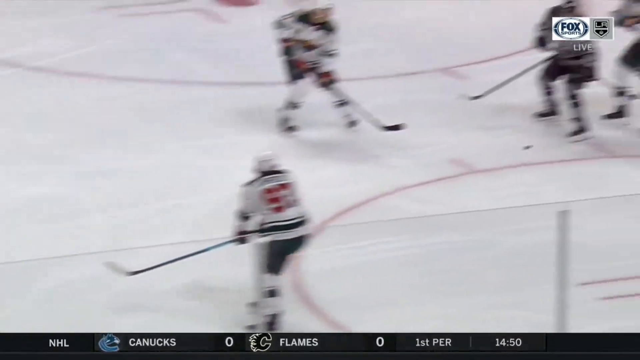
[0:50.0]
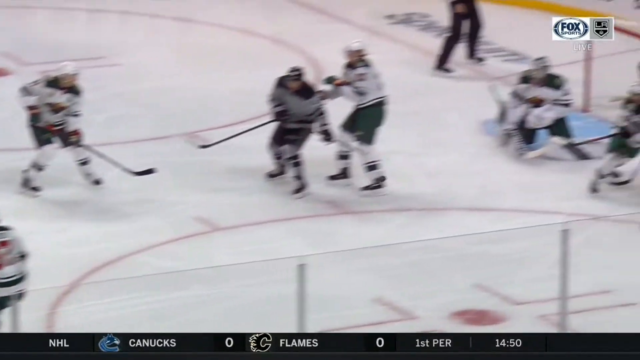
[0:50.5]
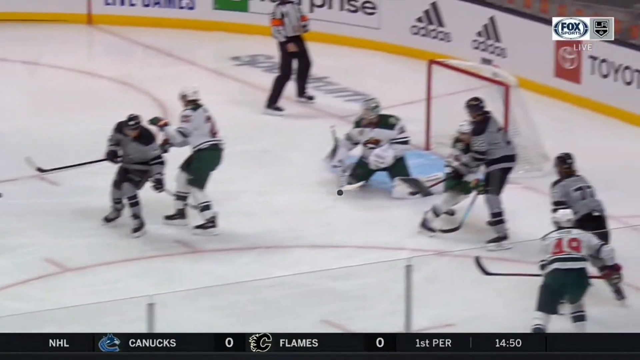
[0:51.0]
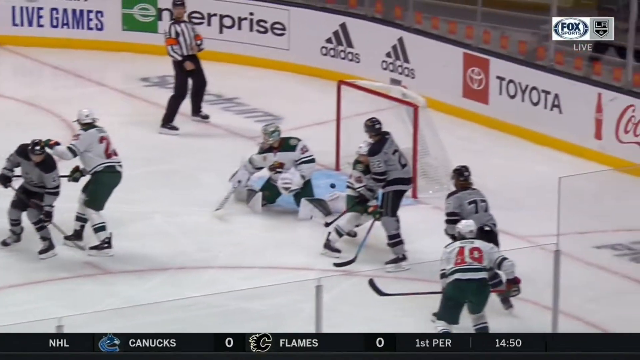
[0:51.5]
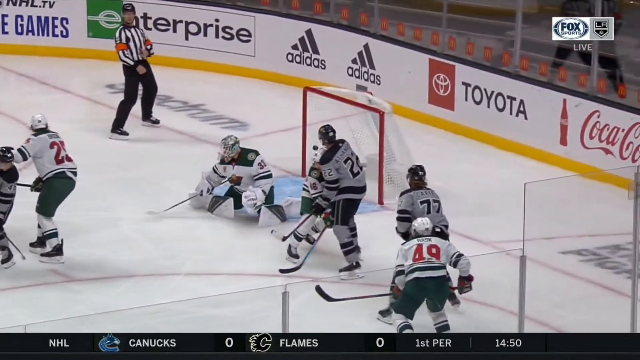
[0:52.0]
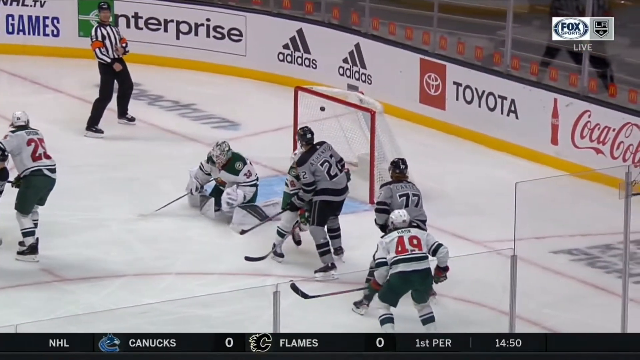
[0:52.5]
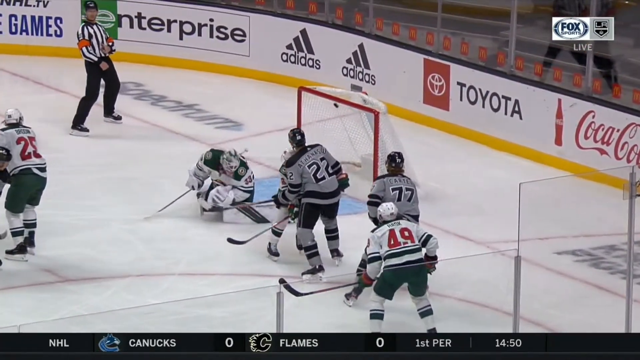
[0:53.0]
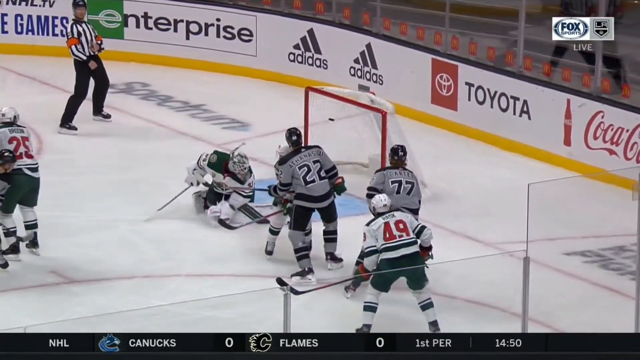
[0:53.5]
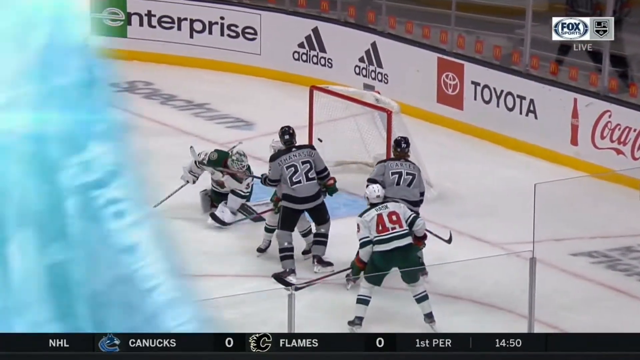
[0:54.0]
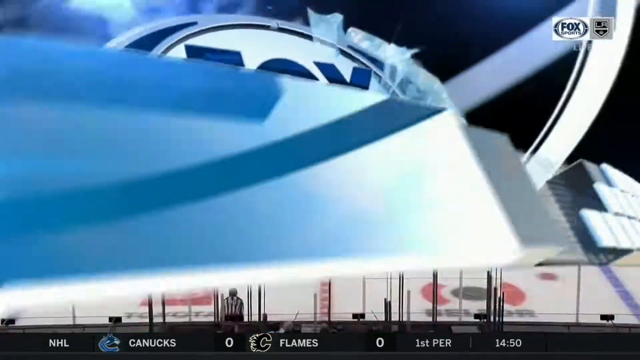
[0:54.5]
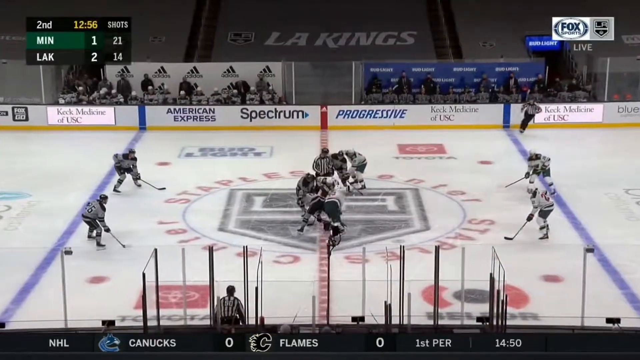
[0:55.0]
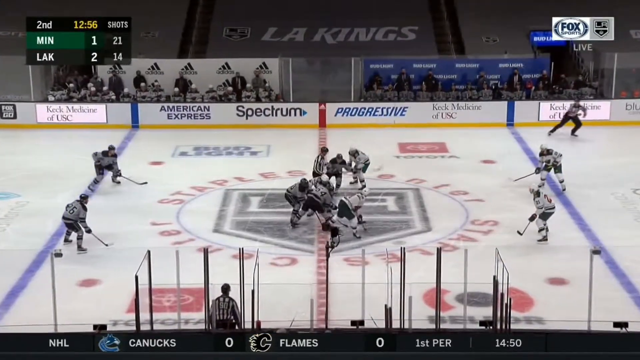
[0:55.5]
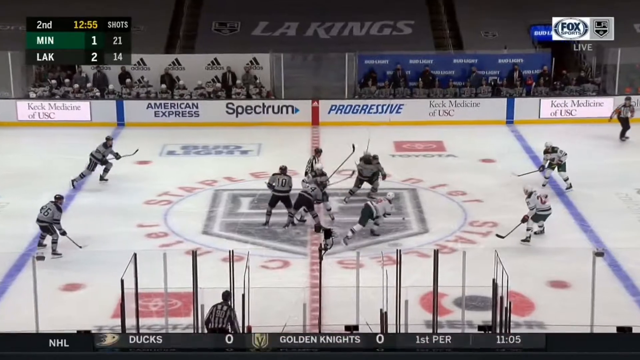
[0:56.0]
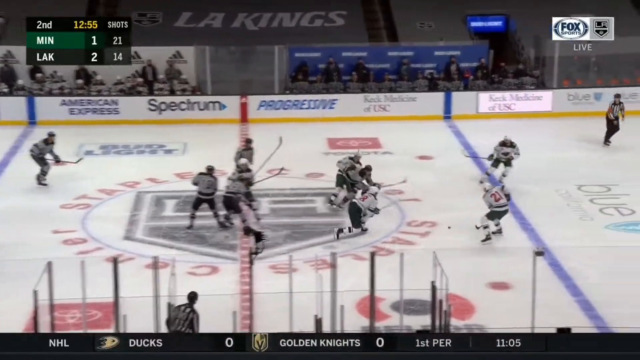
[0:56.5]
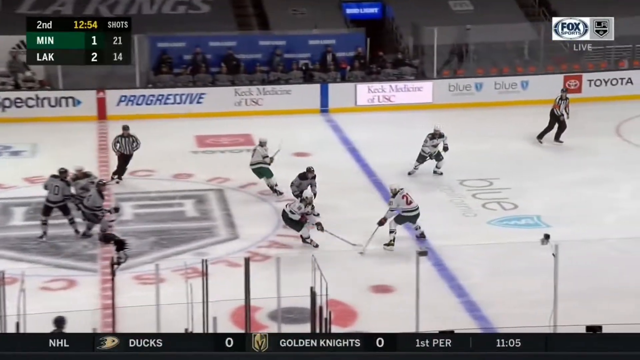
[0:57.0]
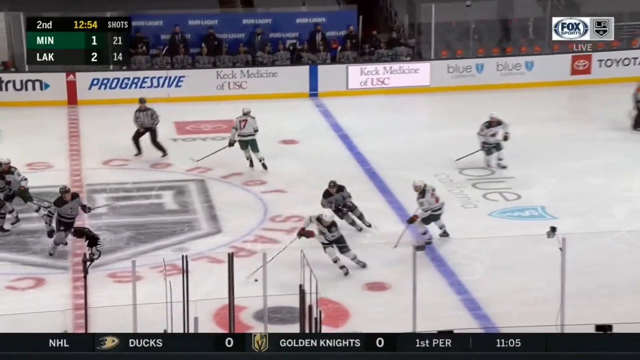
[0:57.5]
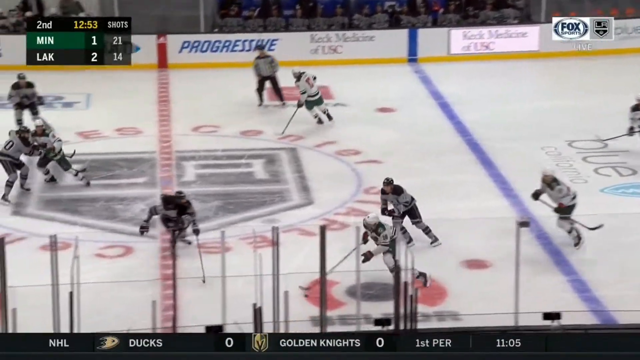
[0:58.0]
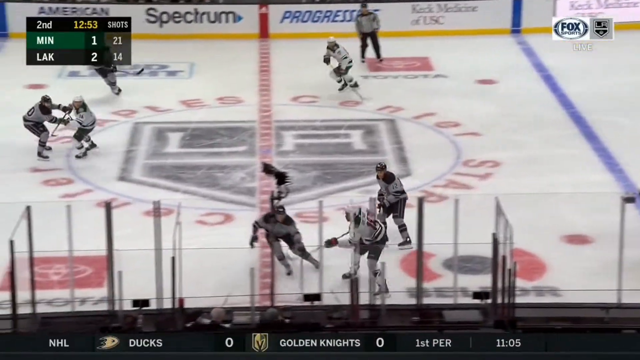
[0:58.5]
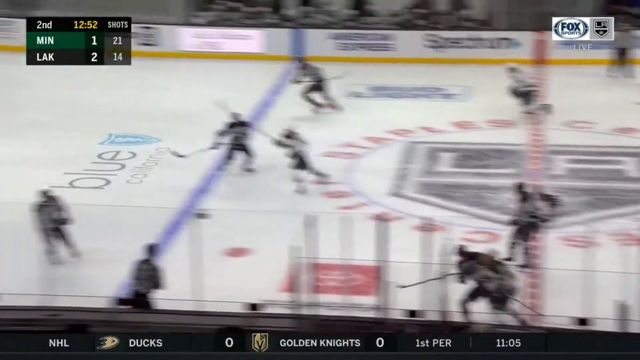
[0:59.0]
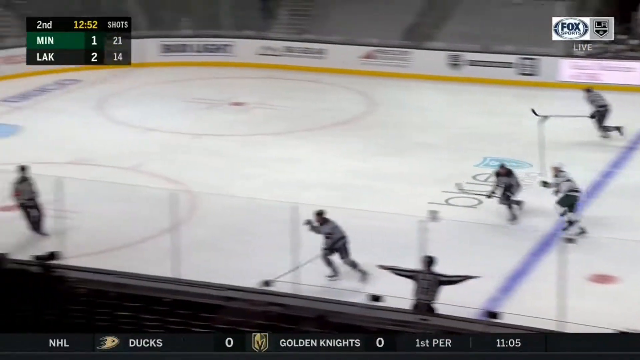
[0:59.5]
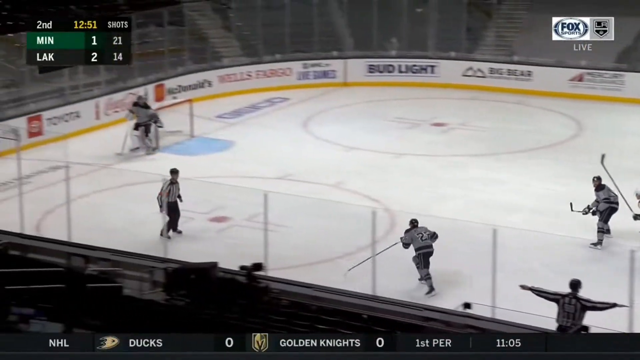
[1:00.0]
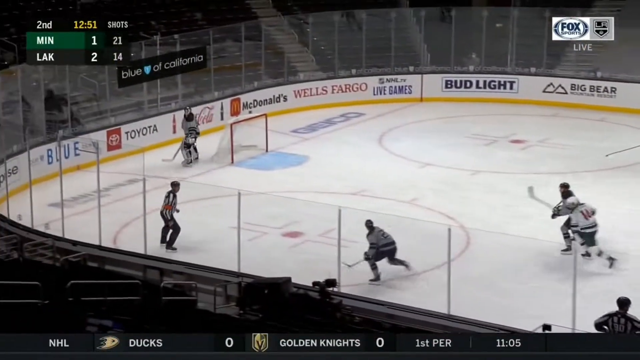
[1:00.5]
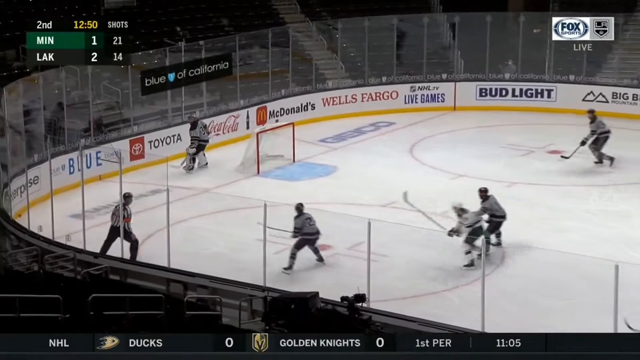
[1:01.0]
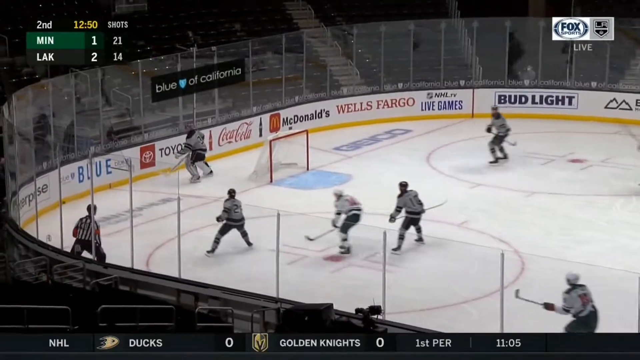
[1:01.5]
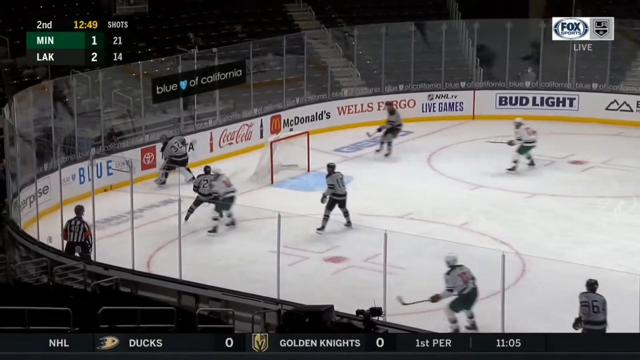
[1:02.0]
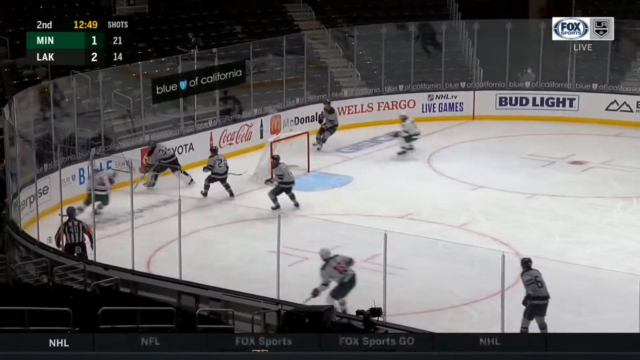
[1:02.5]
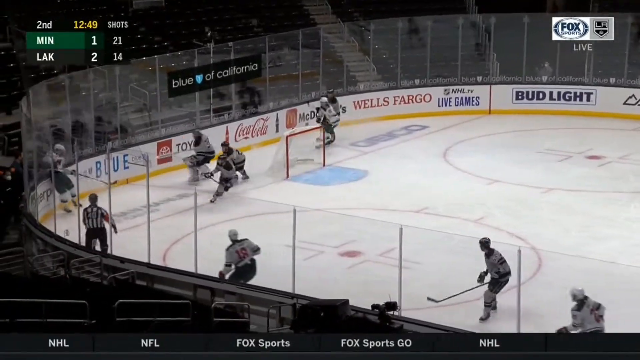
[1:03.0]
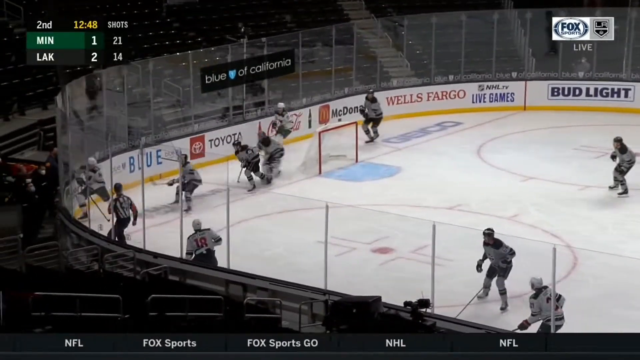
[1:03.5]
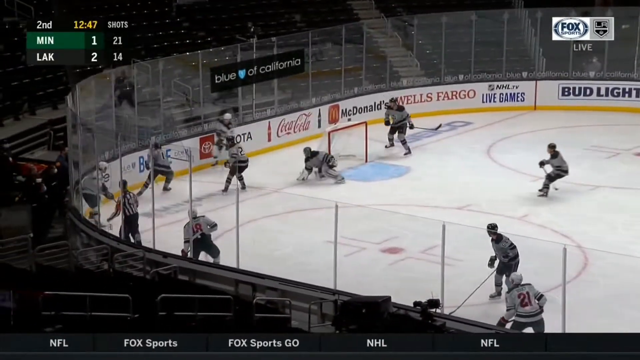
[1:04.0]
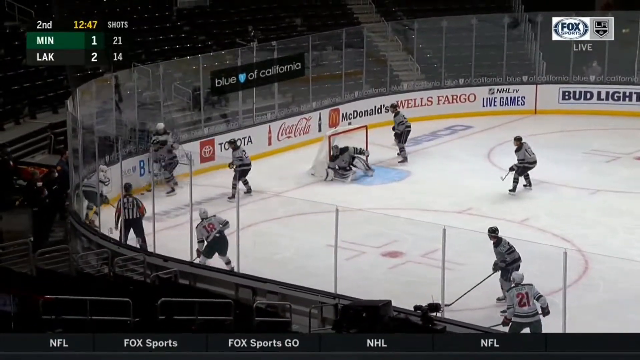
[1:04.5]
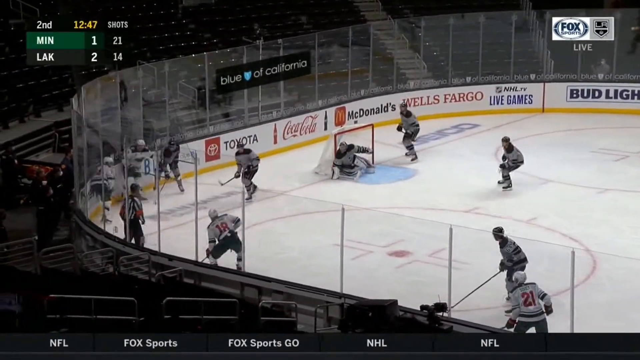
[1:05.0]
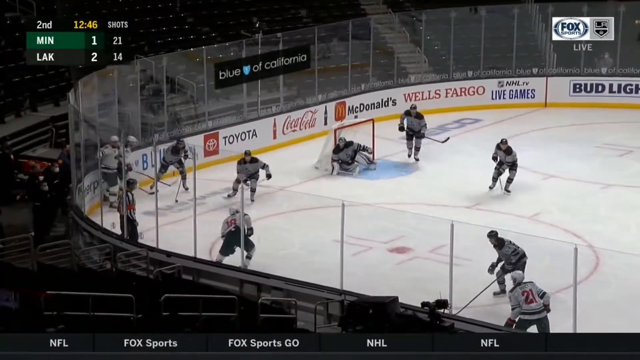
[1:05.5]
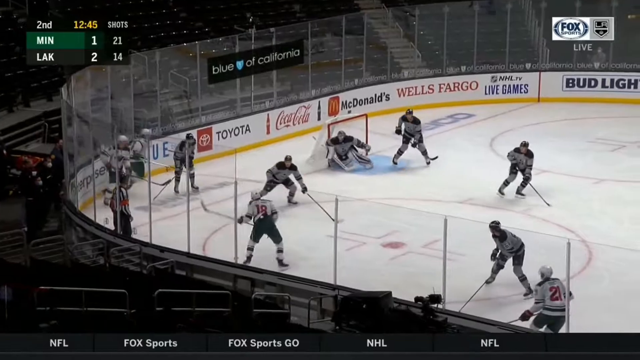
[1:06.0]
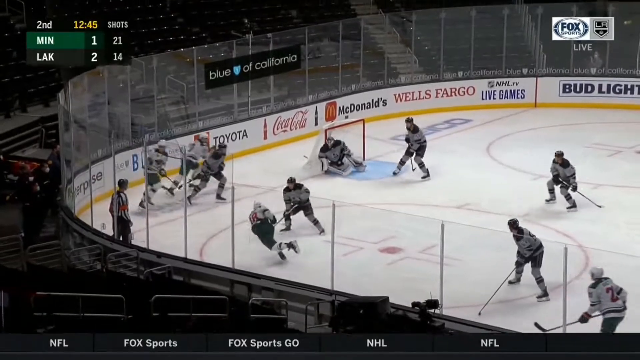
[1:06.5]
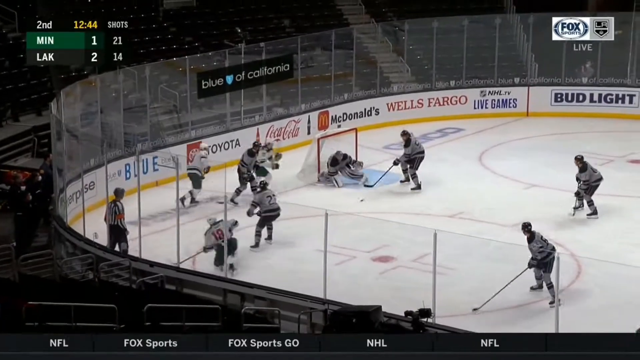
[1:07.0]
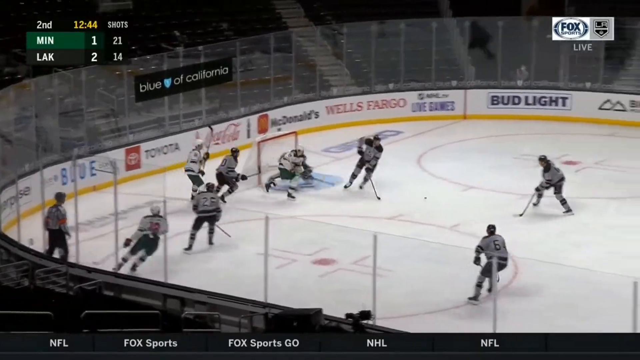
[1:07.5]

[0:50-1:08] A brief, closer look at the goal begins with the puck already hit and moving towards the goal, apparently about 4 or 5 metres out. From this angle the puck ricochets off the goalkeeper's leg. The goalkeeper is crouched low with his legs apart. The puck travels through his legs, seemingly hits his right boot, which is behind him, and goes into the top left corner of the goal. A Fox Studios graphic, a two-tone blue disc, spins across the screen, and the video cuts to the restart after the goal. The score is still 2-1, and the second quarter is shown in a black graphic with white writing in the top left corner, with the Fox Sports live image in the opposite top right corner. At the opening of the restart, 11 players are visible. As the game restarts, play immediately goes down to the grey keeper's end.